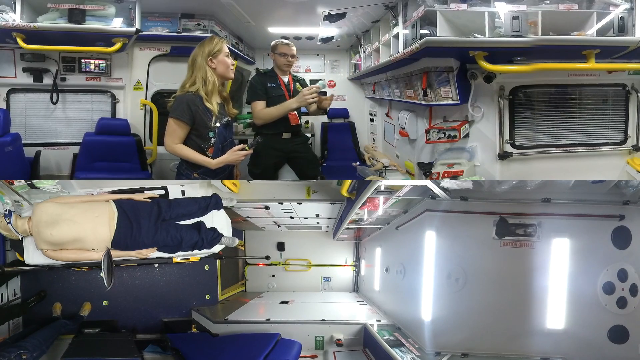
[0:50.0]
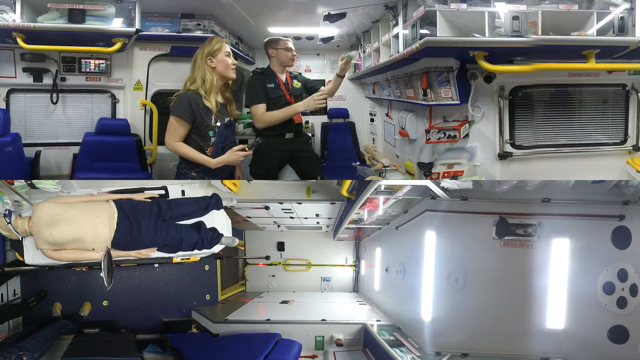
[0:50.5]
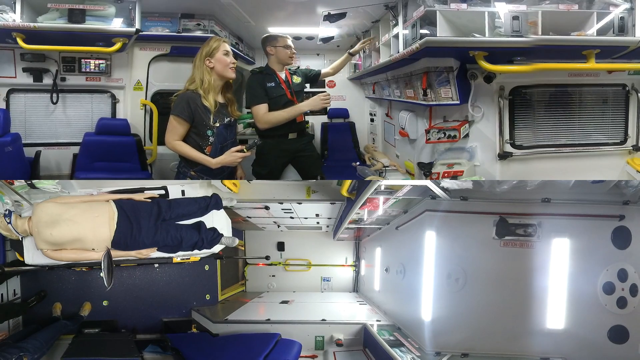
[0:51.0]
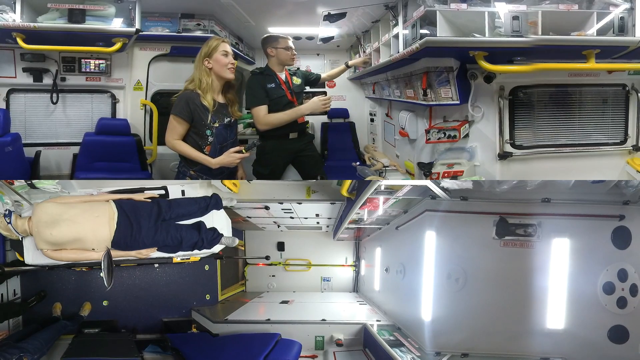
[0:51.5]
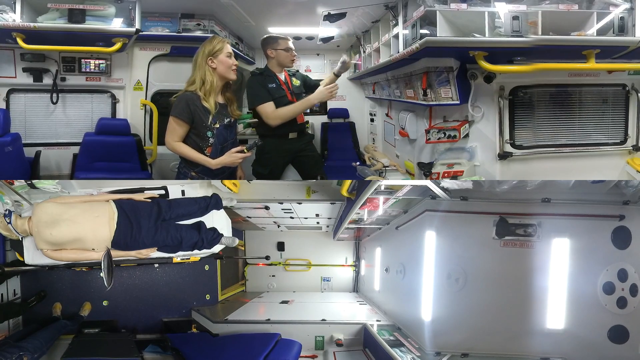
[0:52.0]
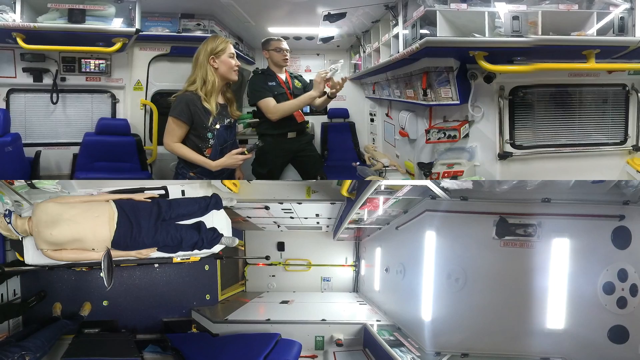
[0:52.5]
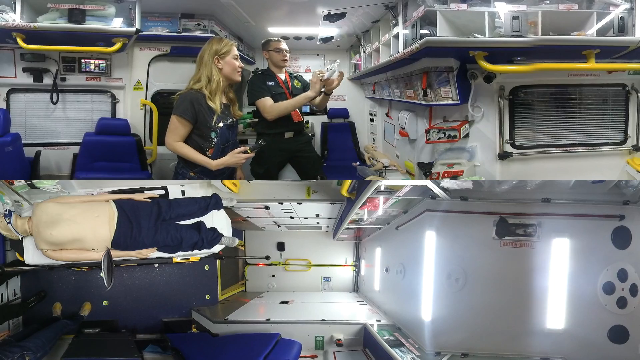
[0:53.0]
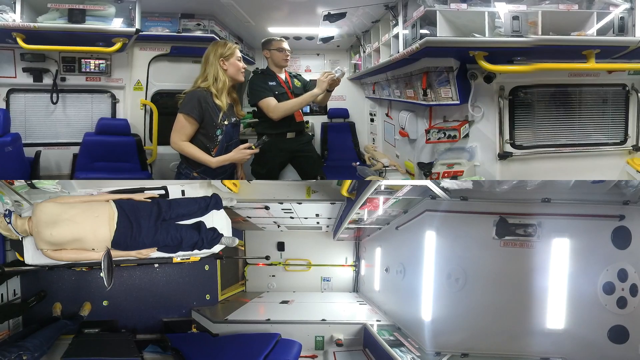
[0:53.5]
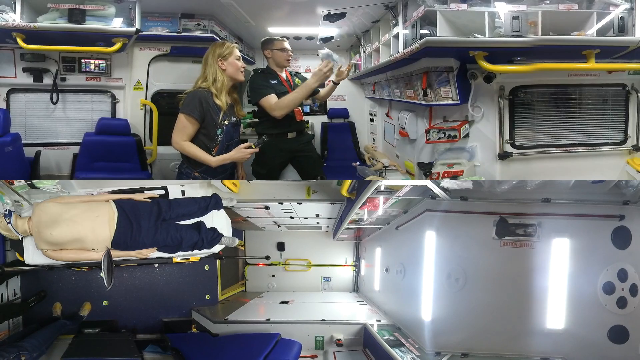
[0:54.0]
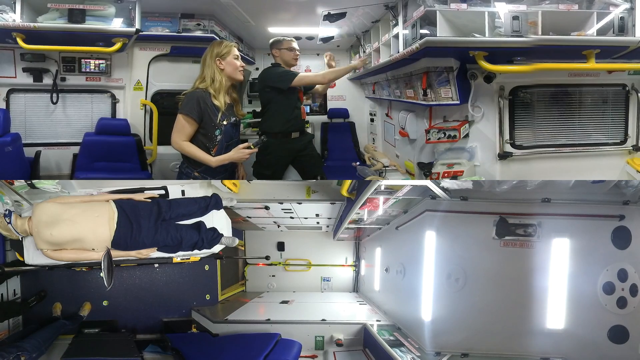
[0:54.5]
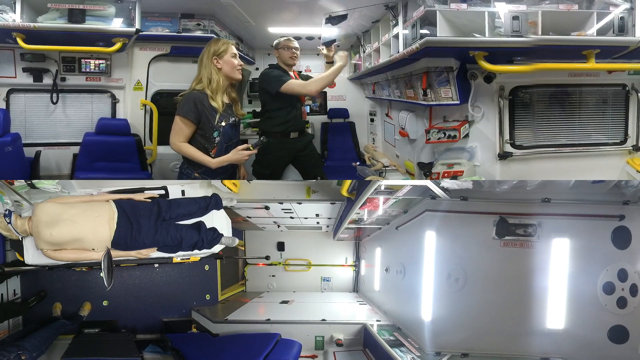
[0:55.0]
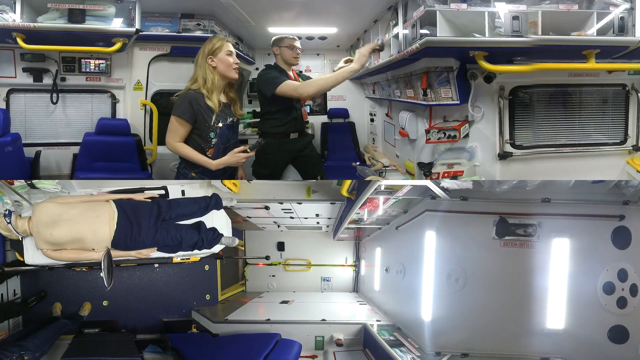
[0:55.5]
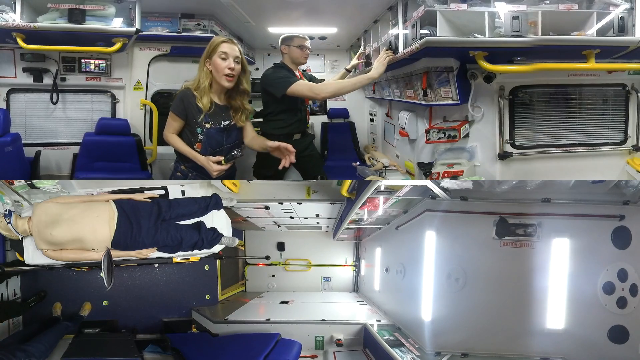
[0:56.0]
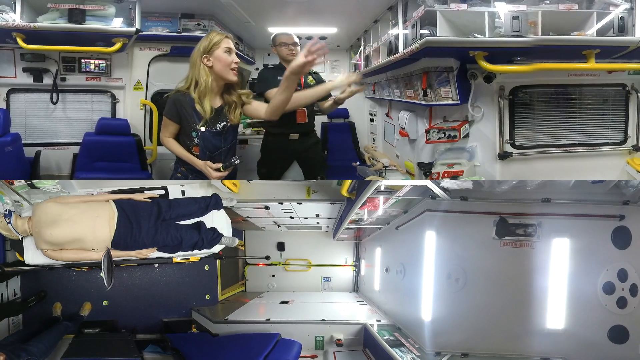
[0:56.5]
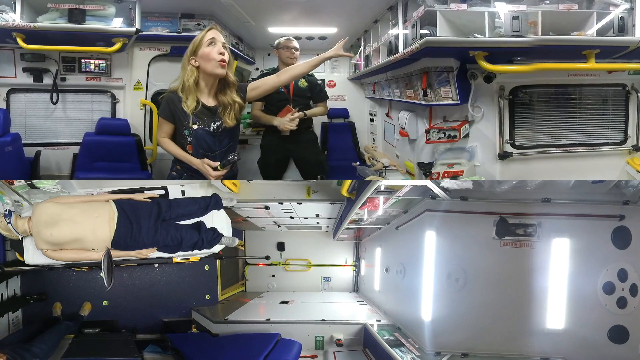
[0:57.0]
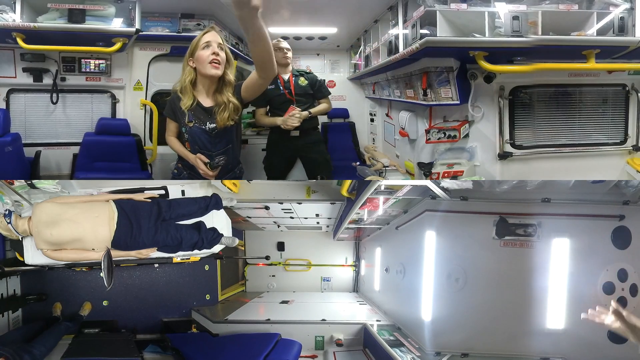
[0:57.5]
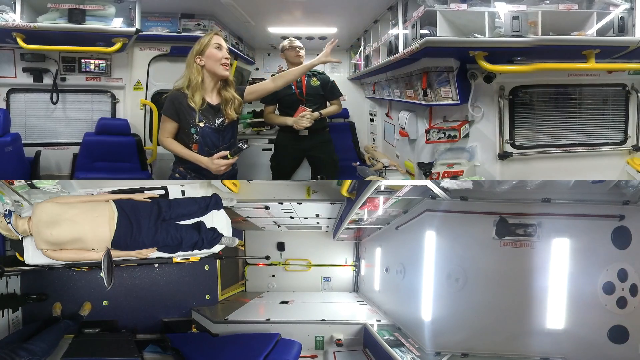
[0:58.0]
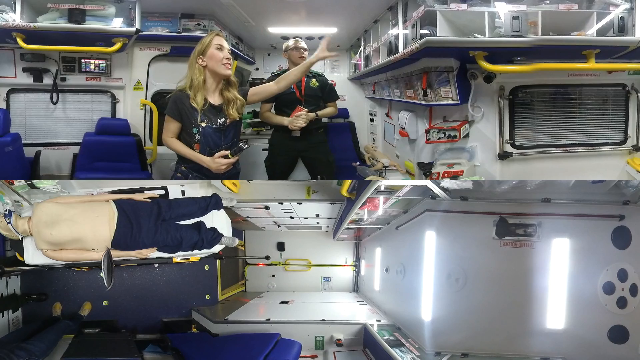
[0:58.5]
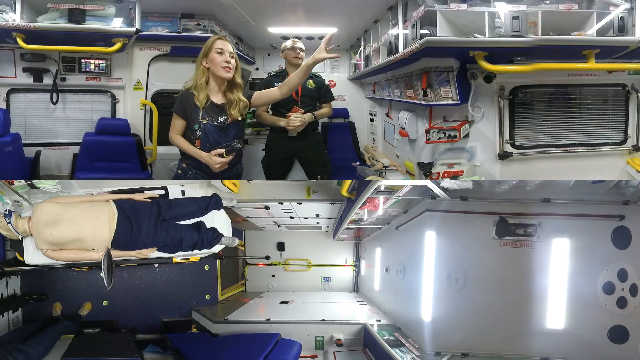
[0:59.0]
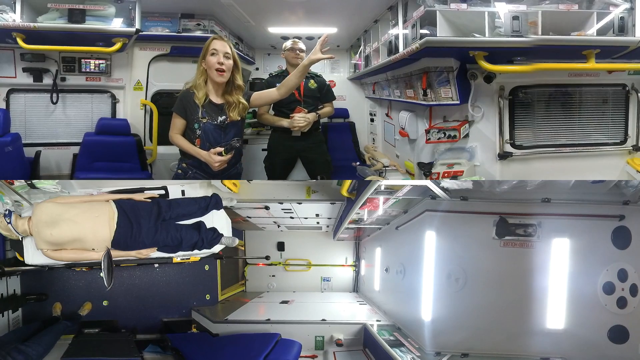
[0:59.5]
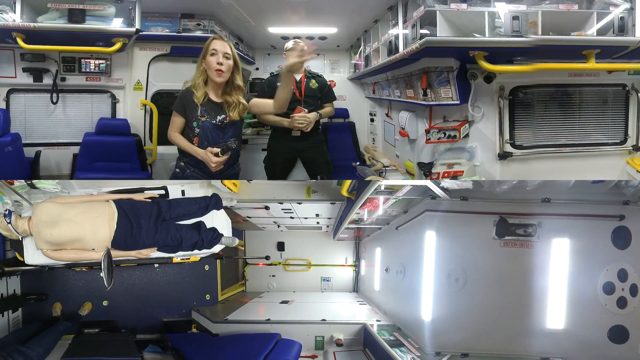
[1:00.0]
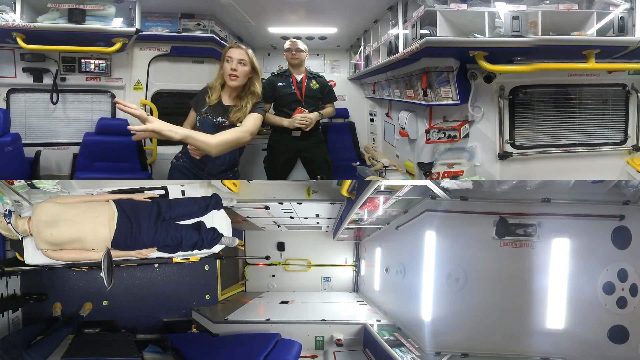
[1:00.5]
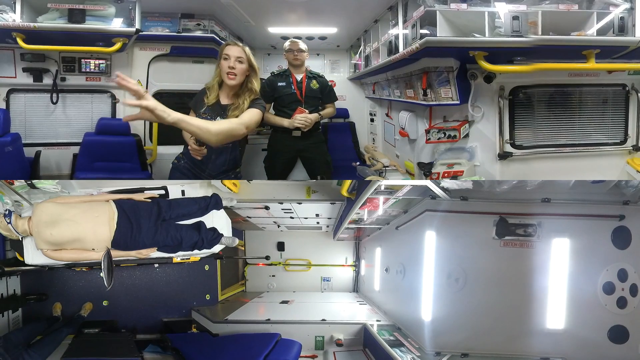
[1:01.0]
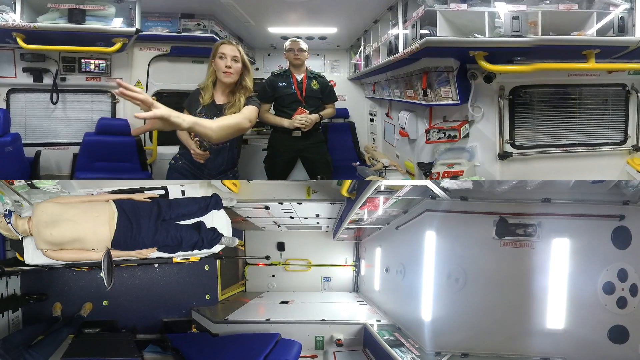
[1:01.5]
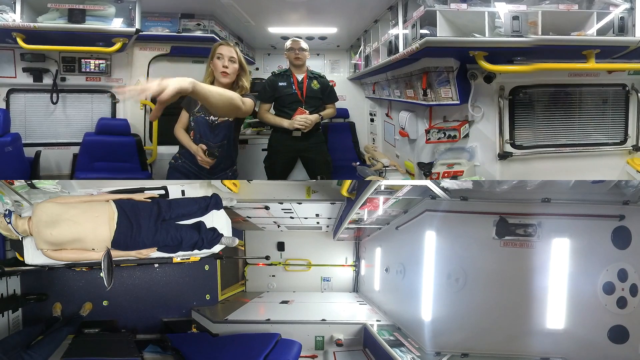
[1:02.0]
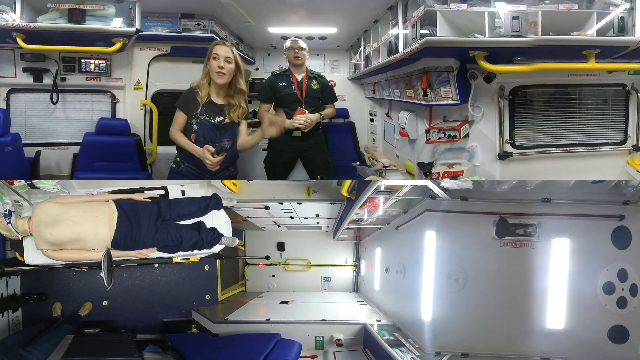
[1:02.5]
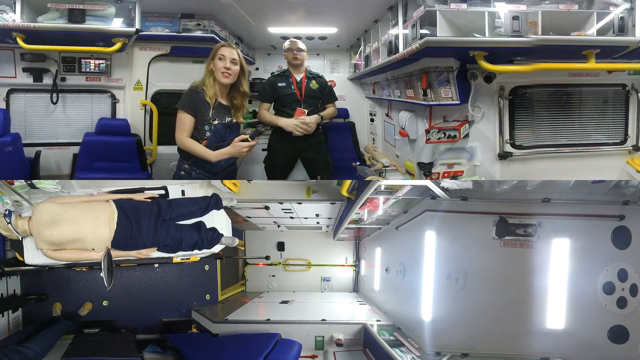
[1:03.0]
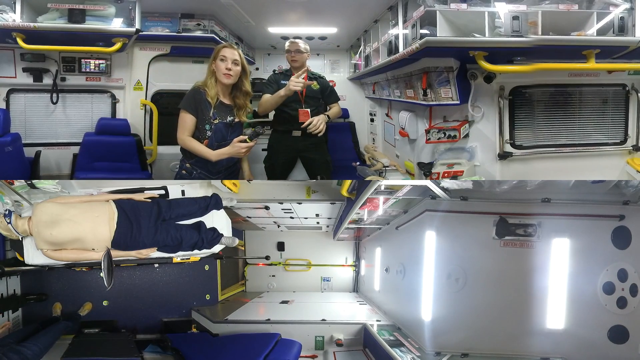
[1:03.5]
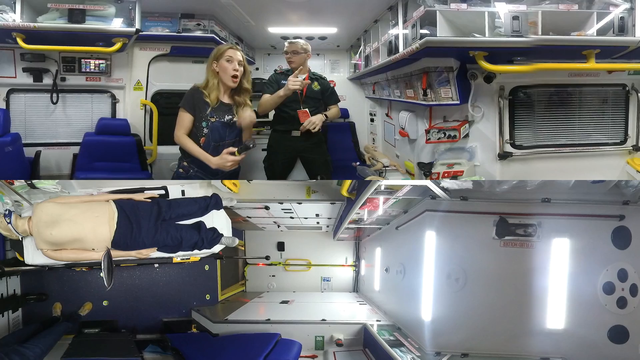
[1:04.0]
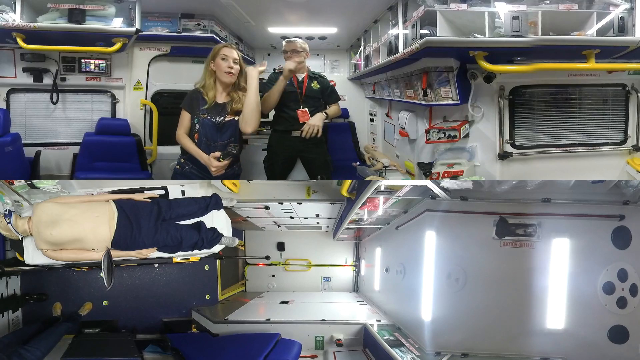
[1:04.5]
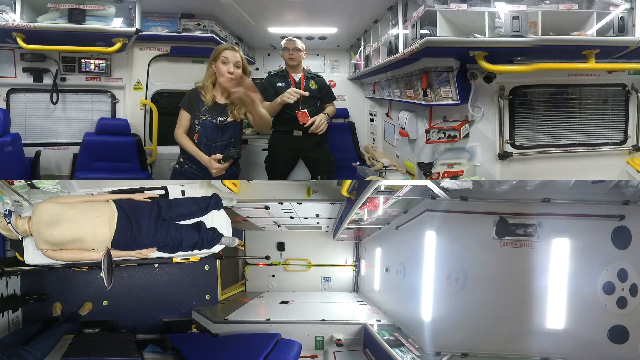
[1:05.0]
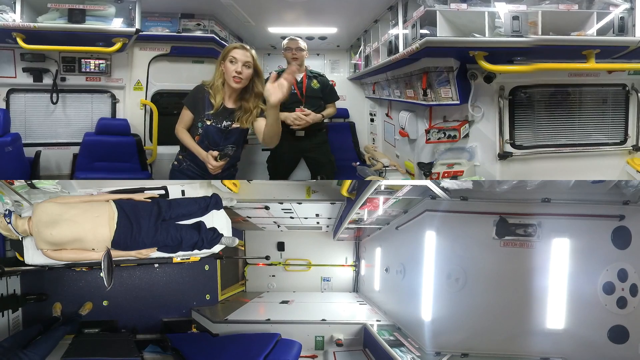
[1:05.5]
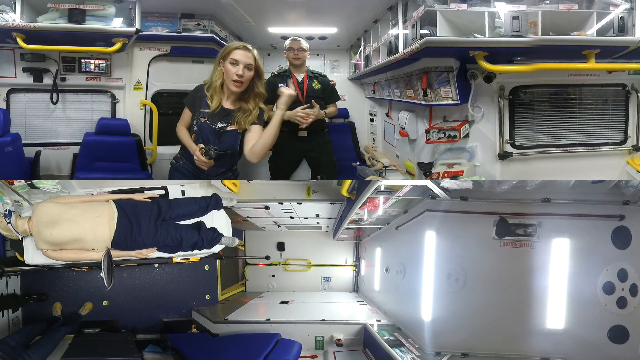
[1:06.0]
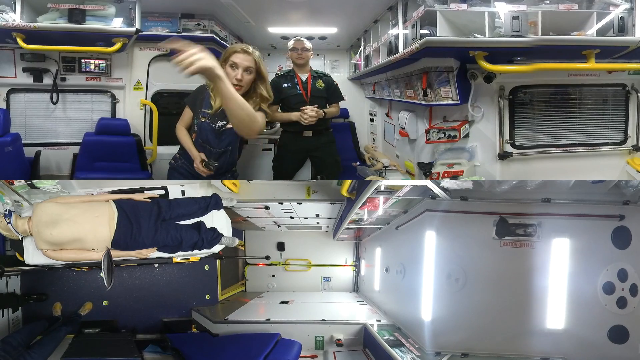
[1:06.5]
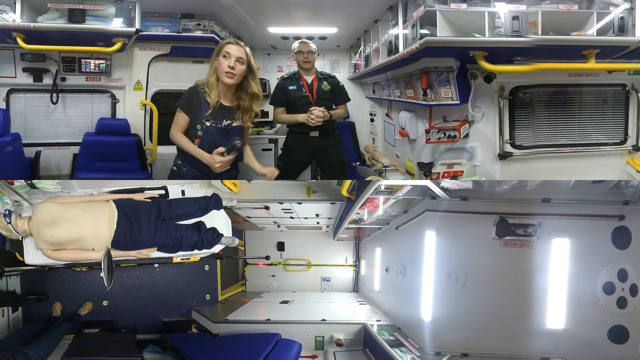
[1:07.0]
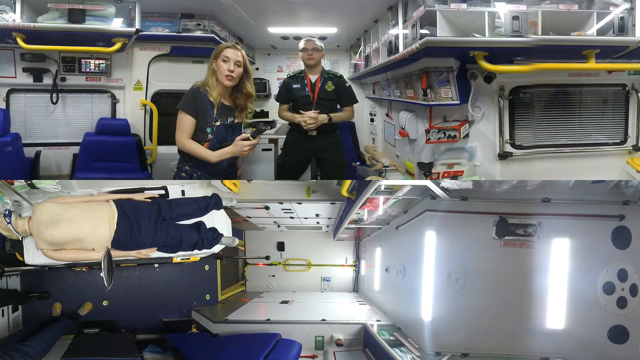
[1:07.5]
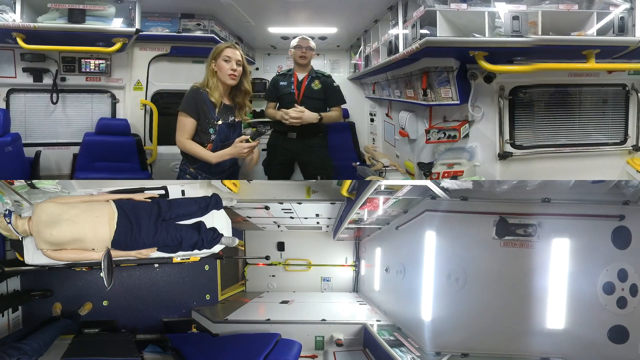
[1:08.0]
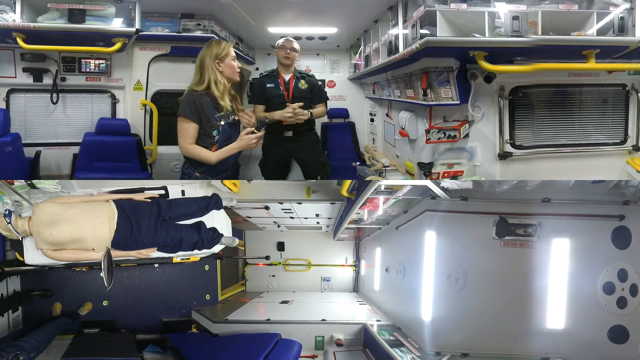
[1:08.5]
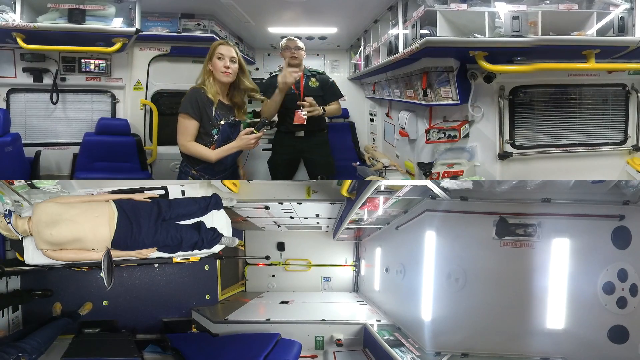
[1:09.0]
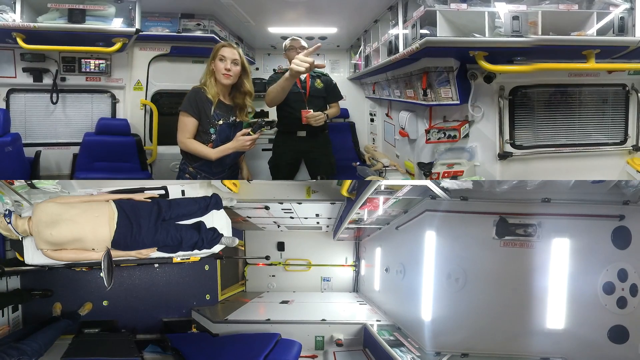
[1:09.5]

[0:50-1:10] The man holds something else he got out of the bin, then puts it back and closes the bin. The bins have clear plastic covers like doors, and they are all little white shelves. As he puts the item away, the woman uses her hands a lot while speaking to him, though she is not really facing him much, her head turned somewhat toward the camera, as if speaking in general. She stretches her arms a lot. Her arms look regular at times, but when she moves her arm a little to her left it looks very big, almost unreal, possibly due to some kind of distortion in the footage. At one point her hand looks very large, and the more she stretches it out and twists it, the larger it looks.